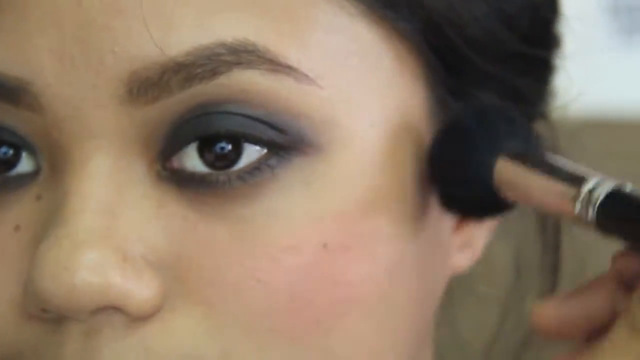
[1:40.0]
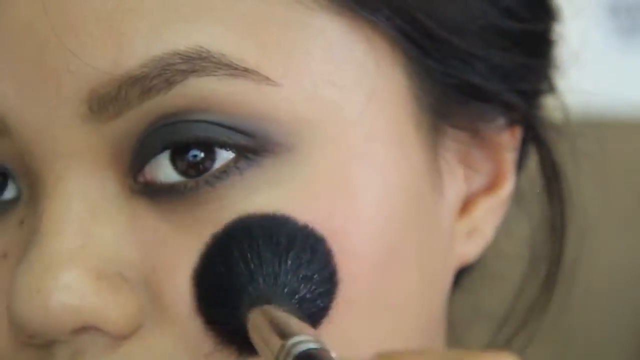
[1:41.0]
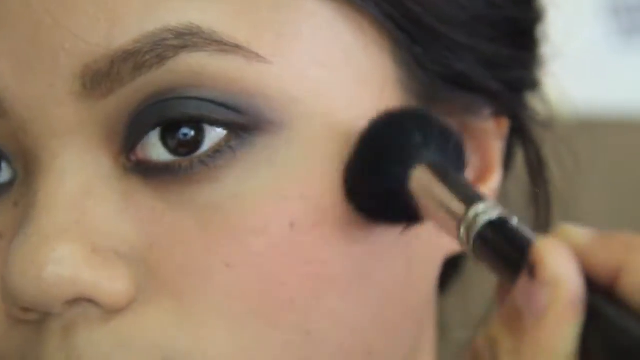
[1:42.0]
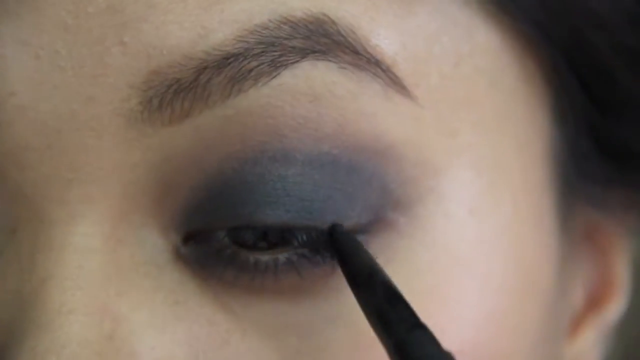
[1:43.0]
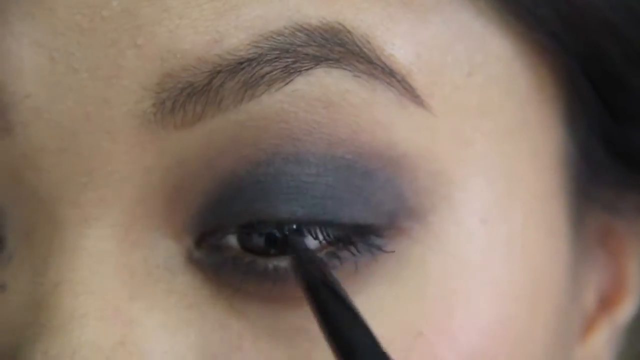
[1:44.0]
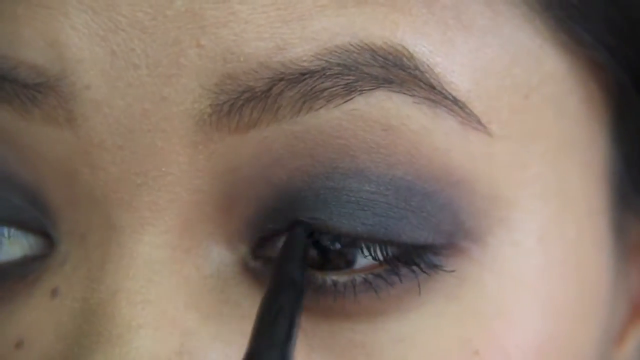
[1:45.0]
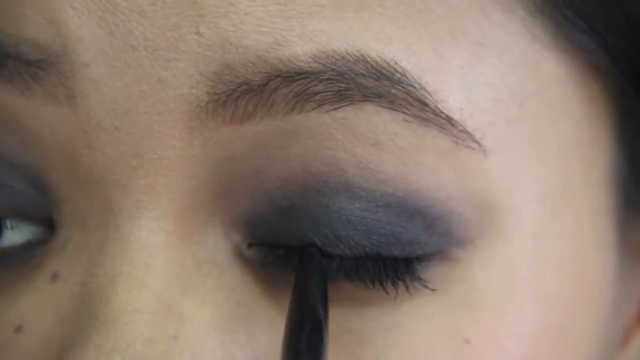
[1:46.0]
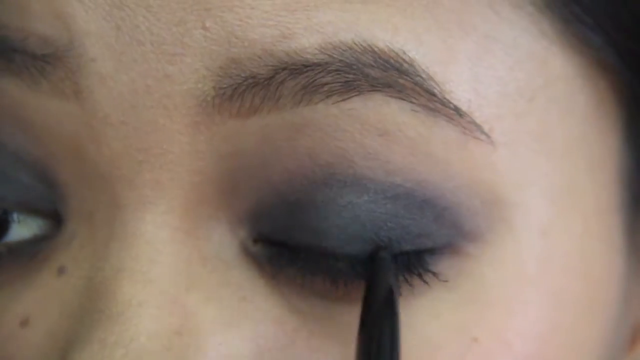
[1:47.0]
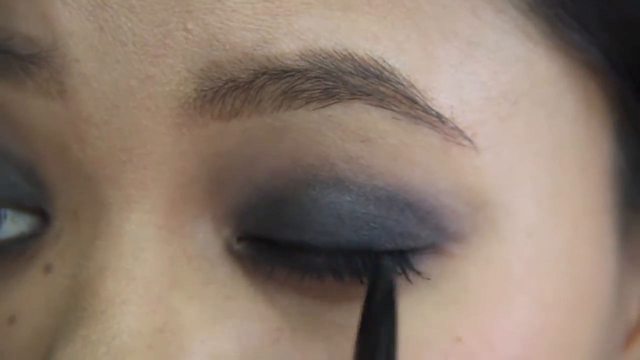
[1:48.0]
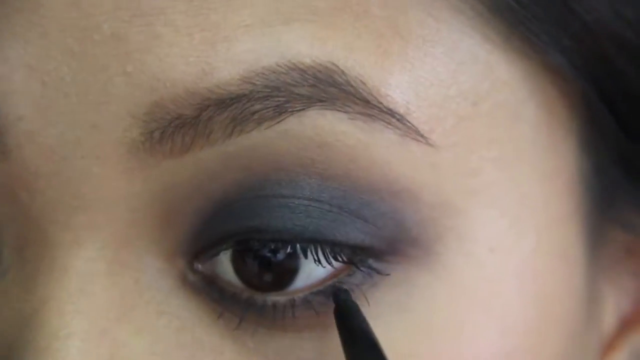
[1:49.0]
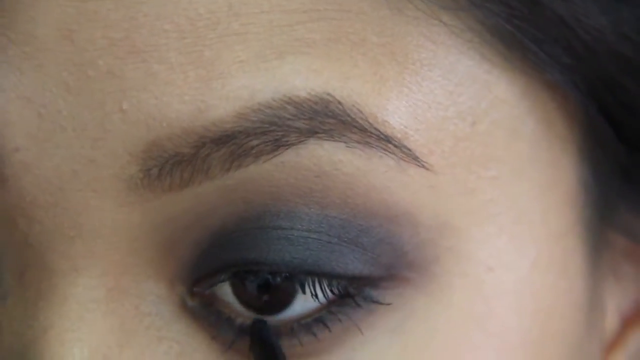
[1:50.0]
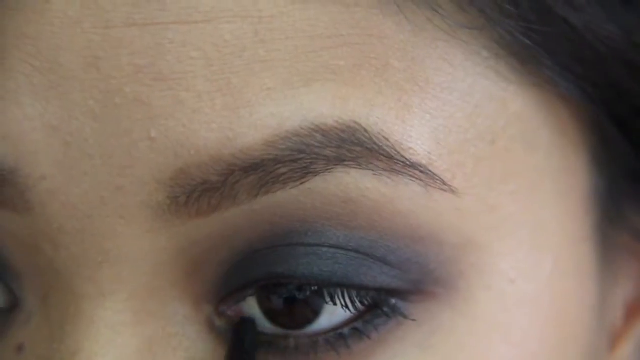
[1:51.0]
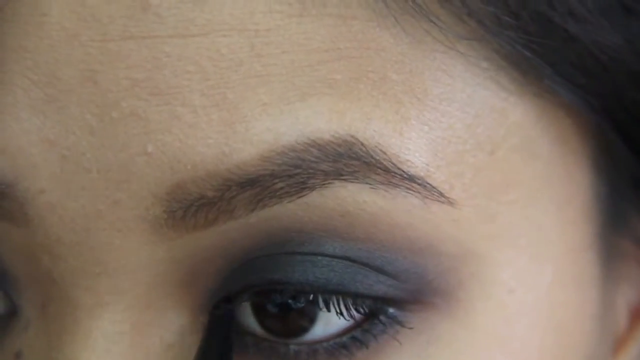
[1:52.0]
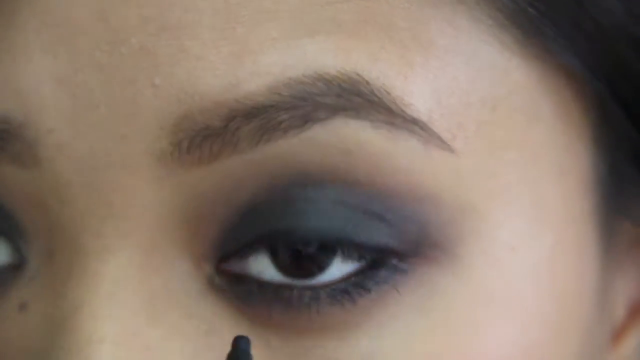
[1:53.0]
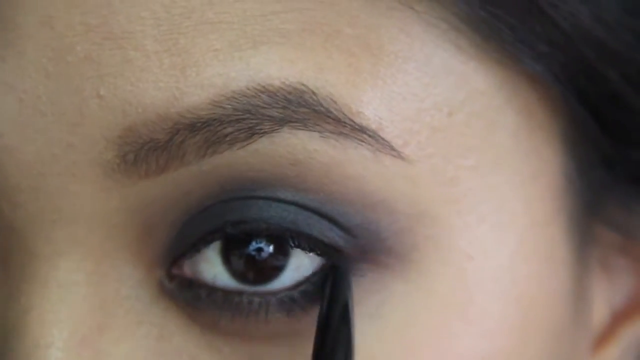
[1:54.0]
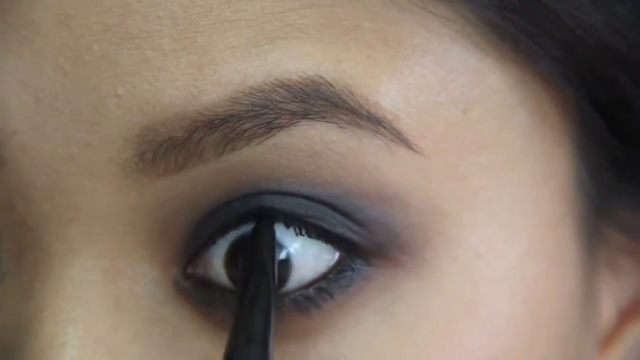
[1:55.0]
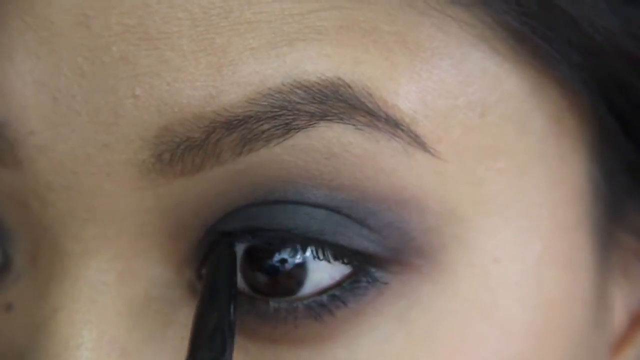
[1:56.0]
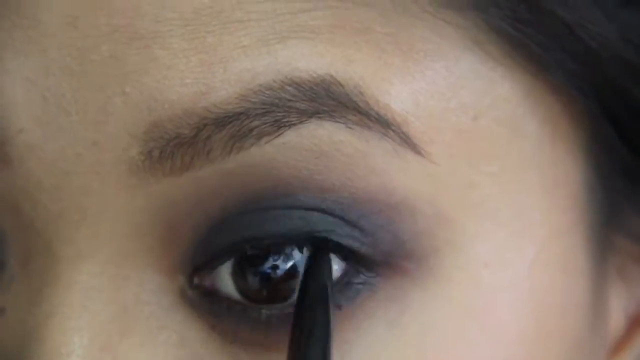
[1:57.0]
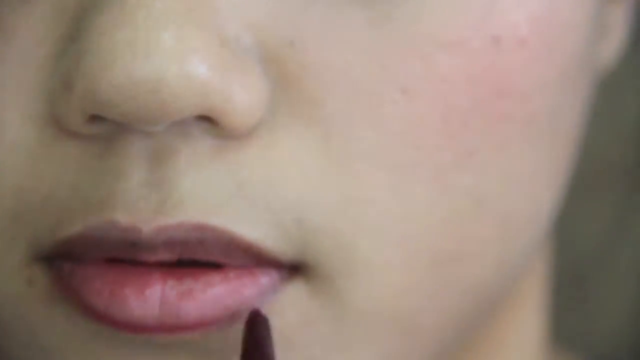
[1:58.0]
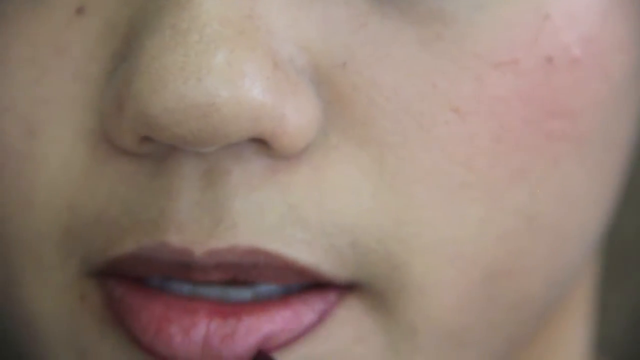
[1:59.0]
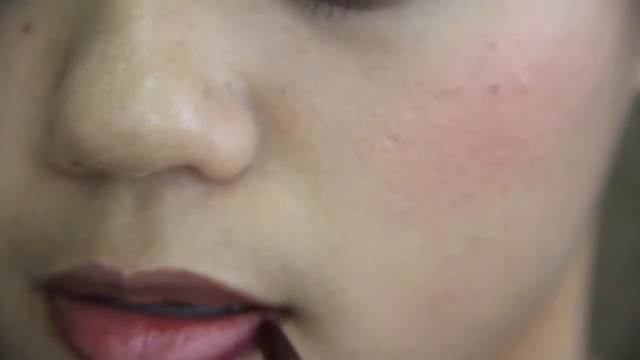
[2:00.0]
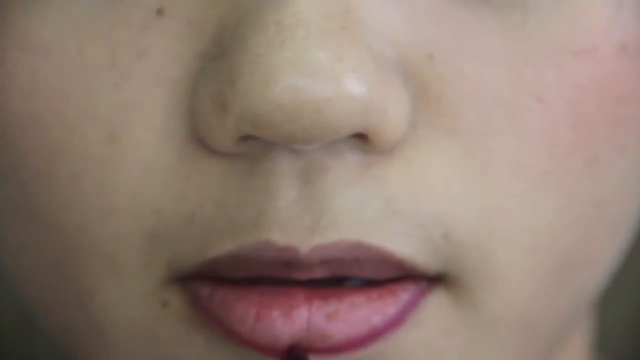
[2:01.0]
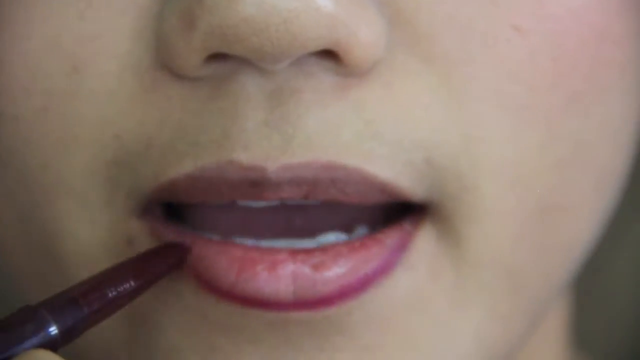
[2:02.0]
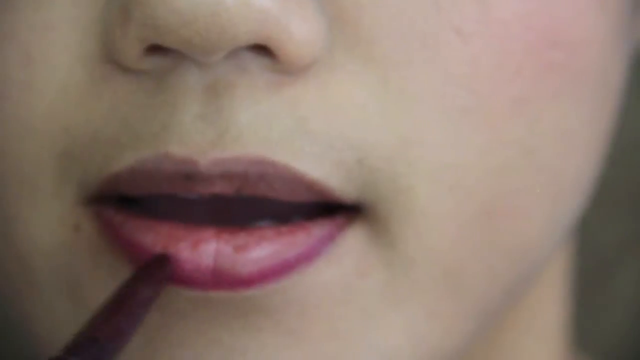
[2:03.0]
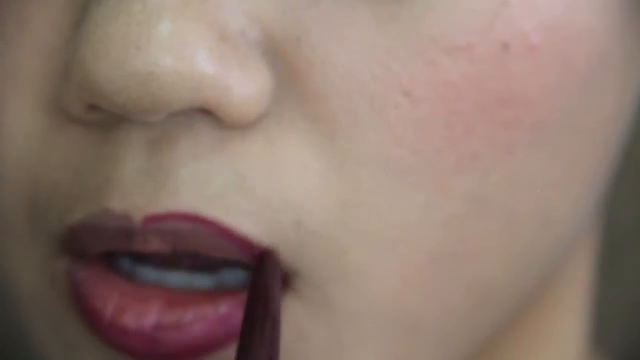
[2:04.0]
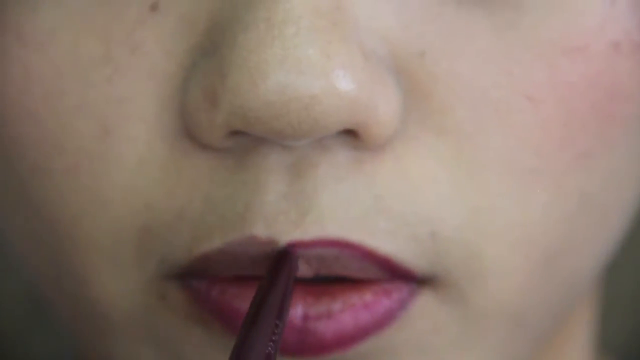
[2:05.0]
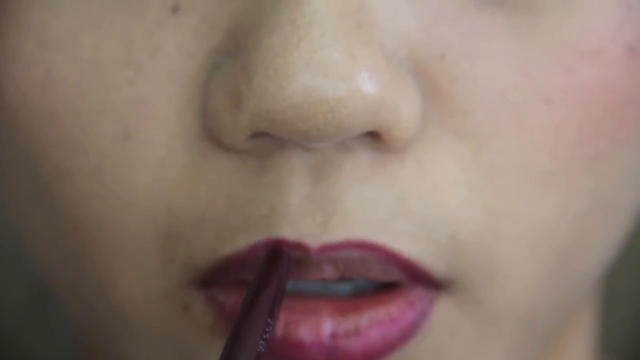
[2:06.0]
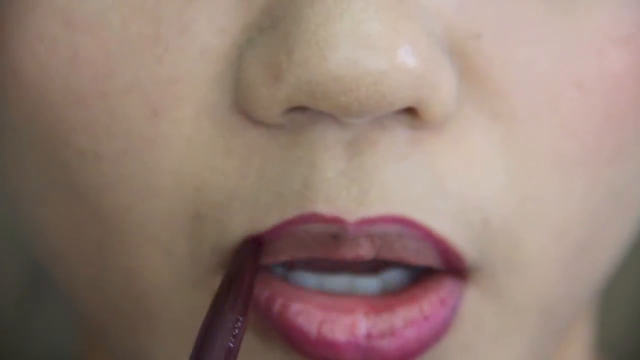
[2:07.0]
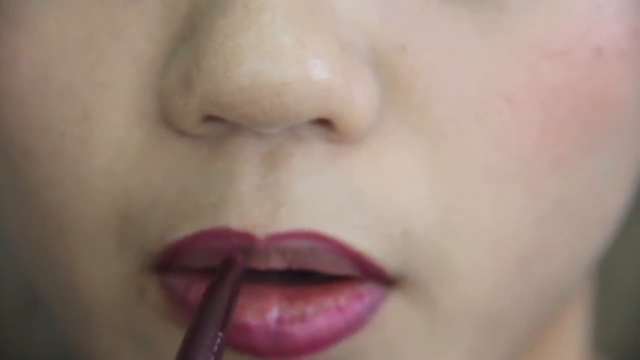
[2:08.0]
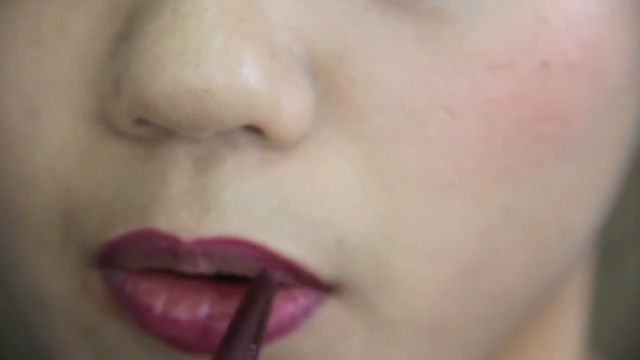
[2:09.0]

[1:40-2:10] Using different types of brushes, she works on her blush, then on her lashes, which look small. She then moves to her lips, drawing a line on the lip with a liner and using a lipstick that matches the liner.